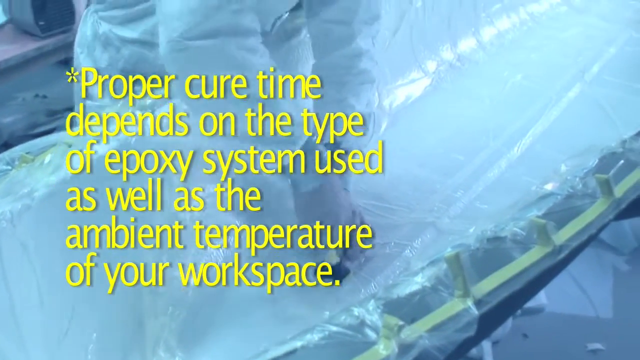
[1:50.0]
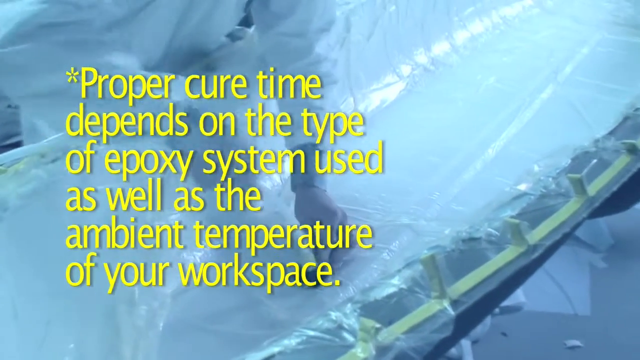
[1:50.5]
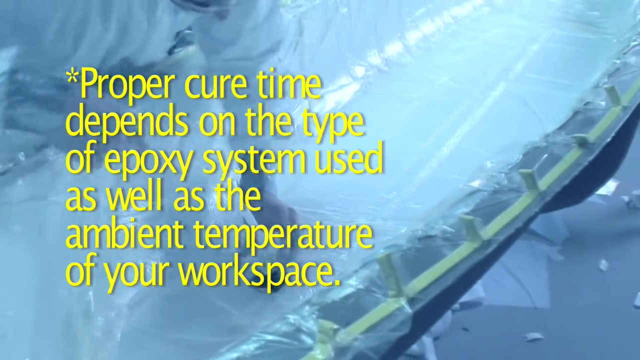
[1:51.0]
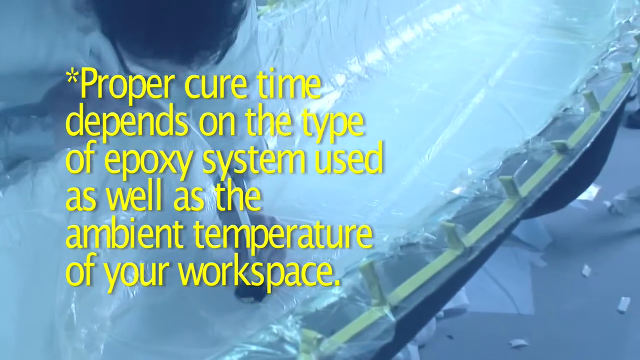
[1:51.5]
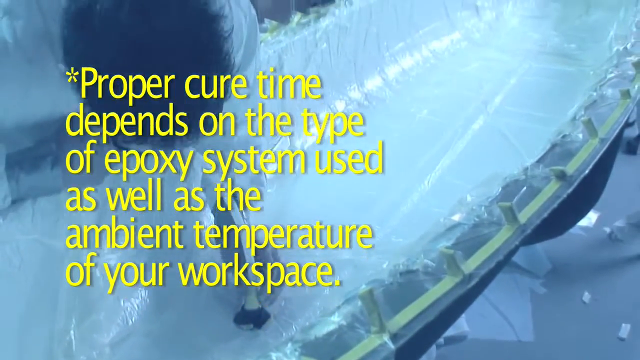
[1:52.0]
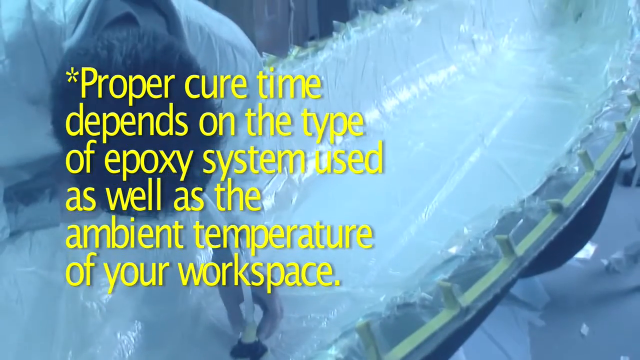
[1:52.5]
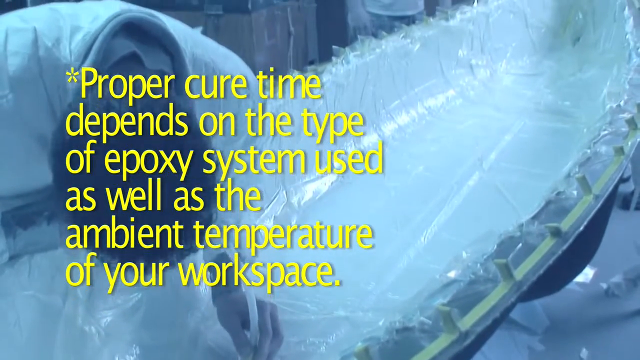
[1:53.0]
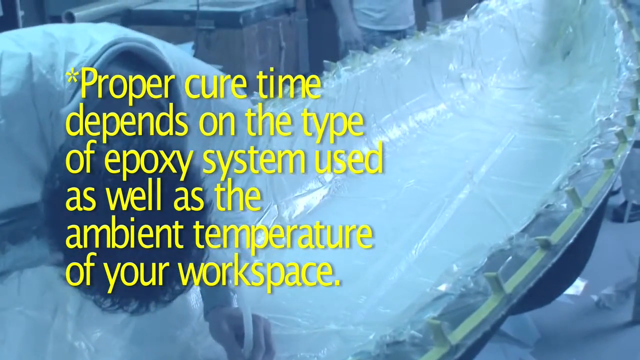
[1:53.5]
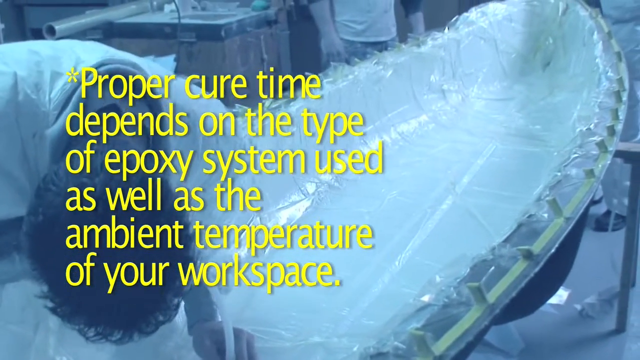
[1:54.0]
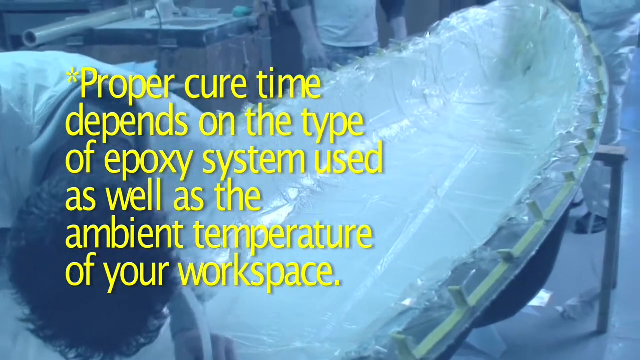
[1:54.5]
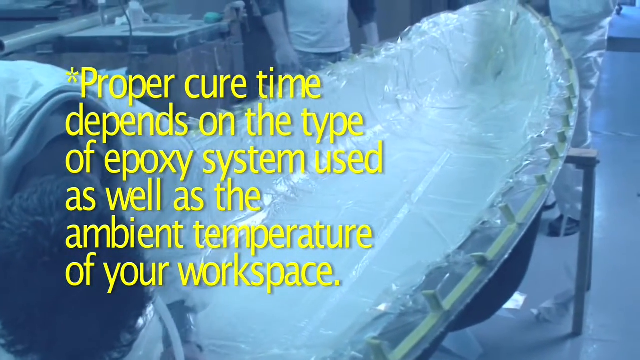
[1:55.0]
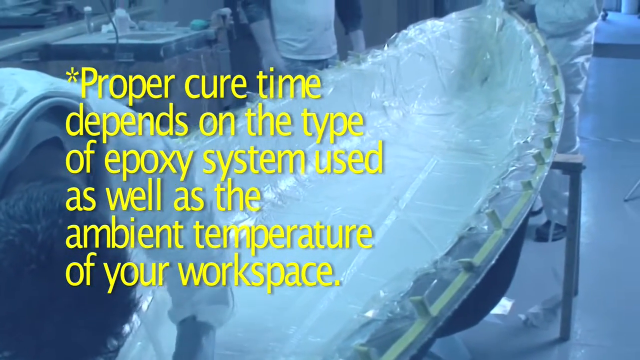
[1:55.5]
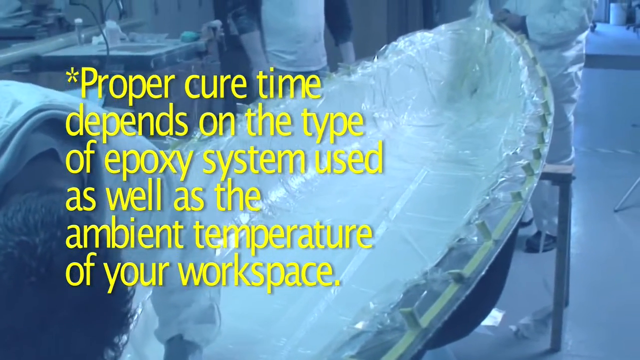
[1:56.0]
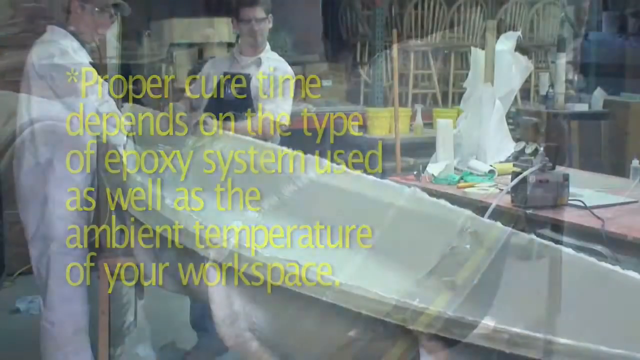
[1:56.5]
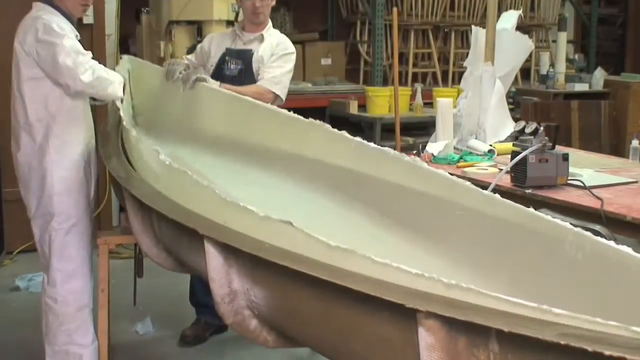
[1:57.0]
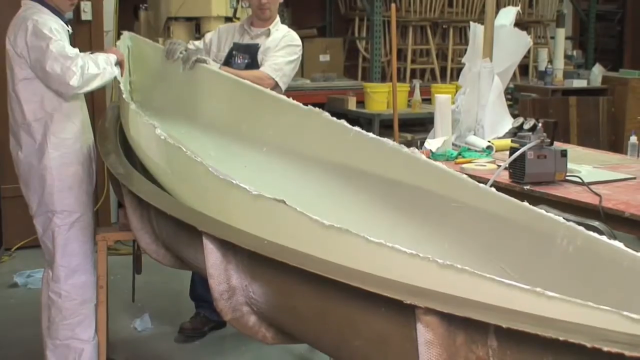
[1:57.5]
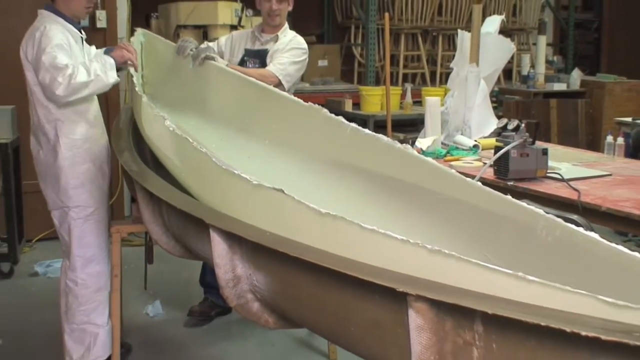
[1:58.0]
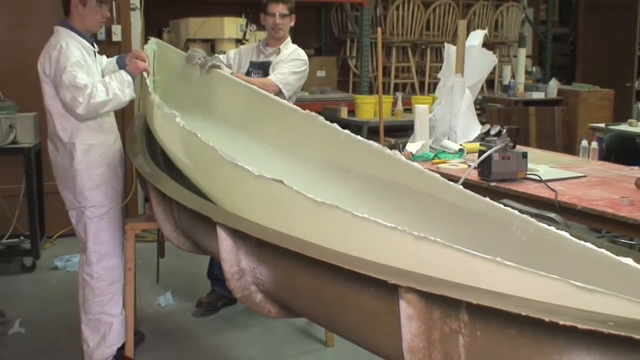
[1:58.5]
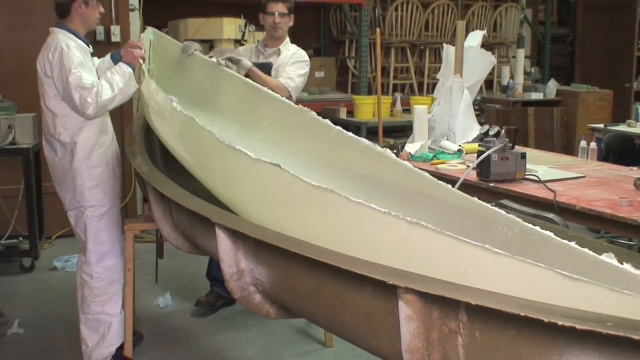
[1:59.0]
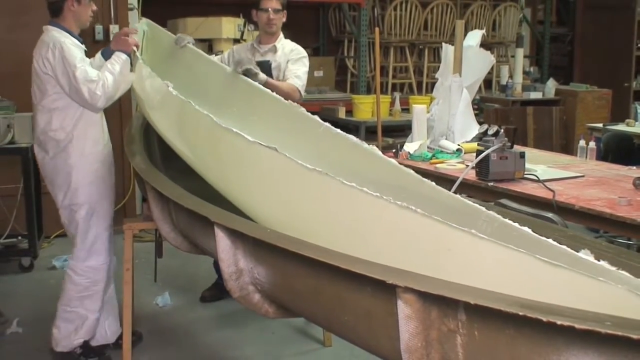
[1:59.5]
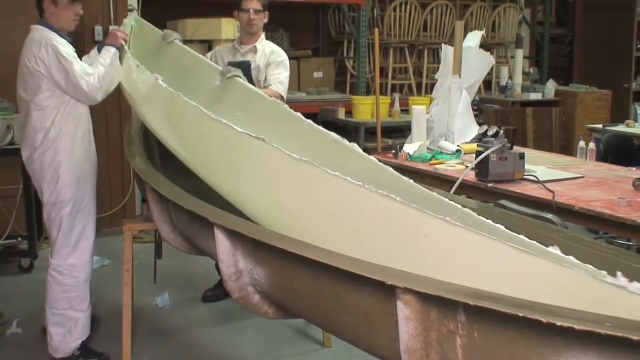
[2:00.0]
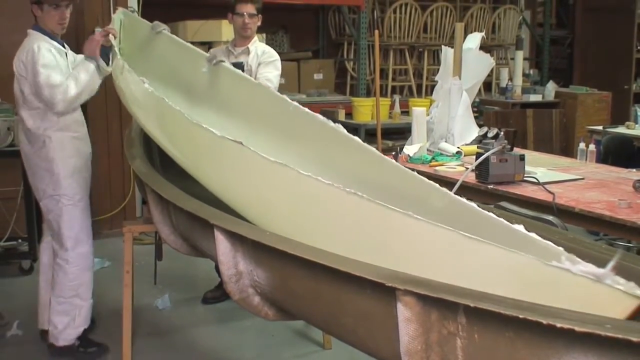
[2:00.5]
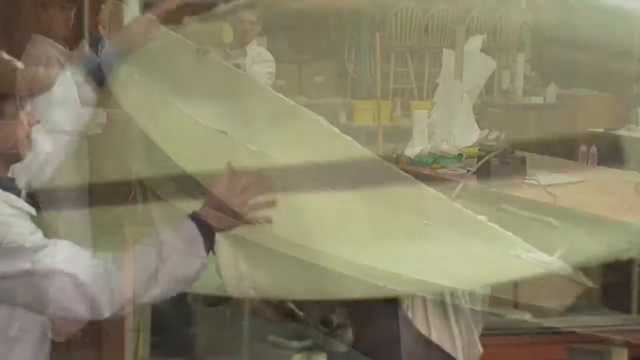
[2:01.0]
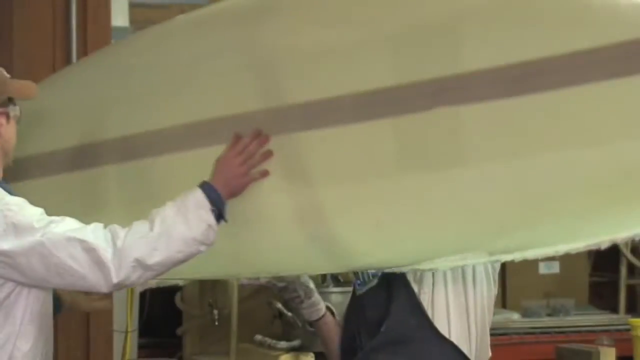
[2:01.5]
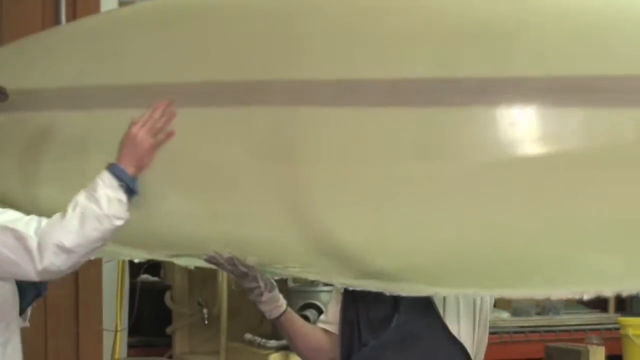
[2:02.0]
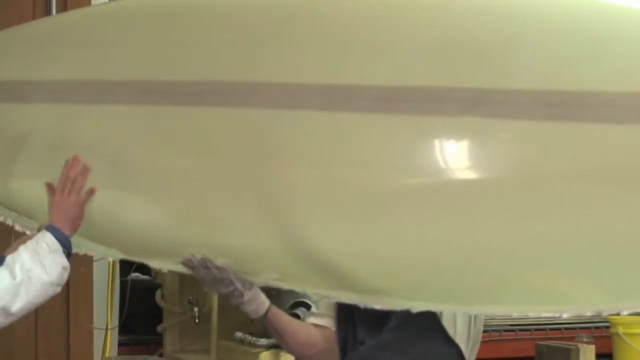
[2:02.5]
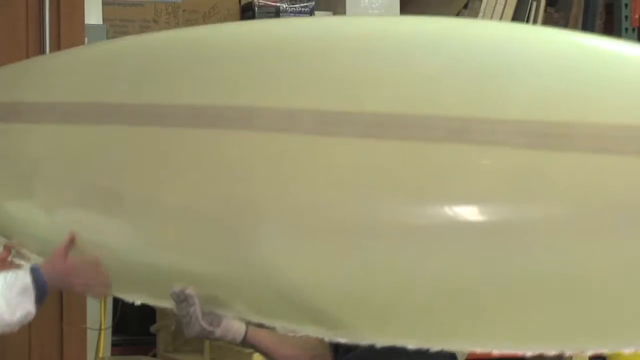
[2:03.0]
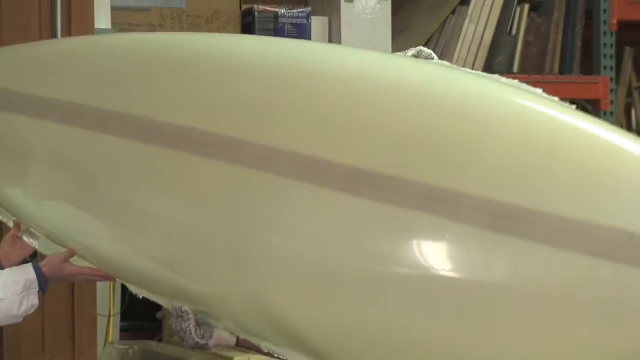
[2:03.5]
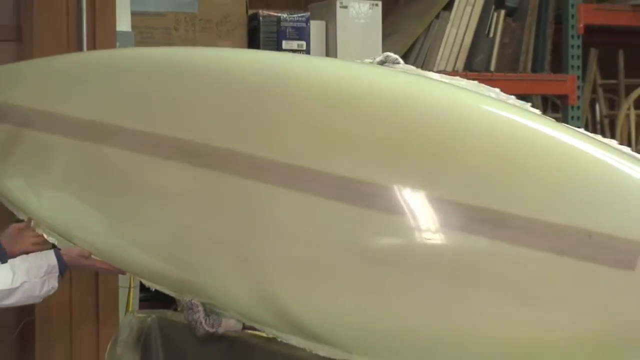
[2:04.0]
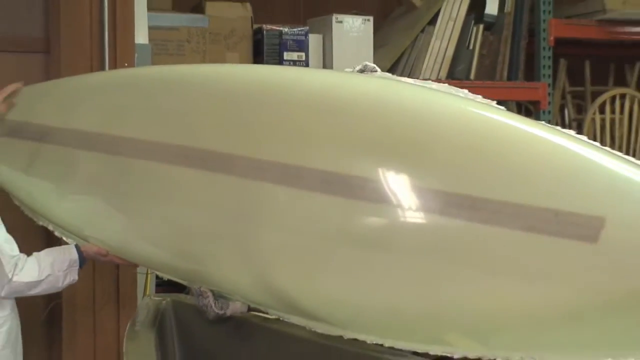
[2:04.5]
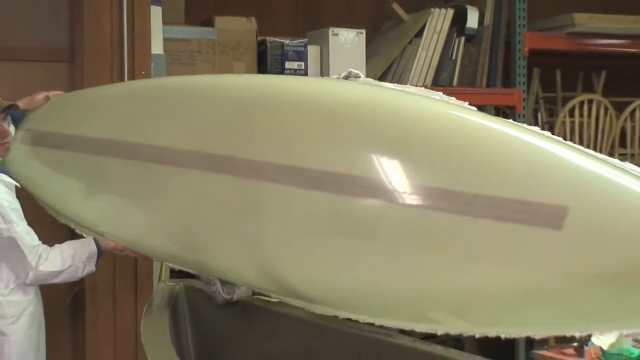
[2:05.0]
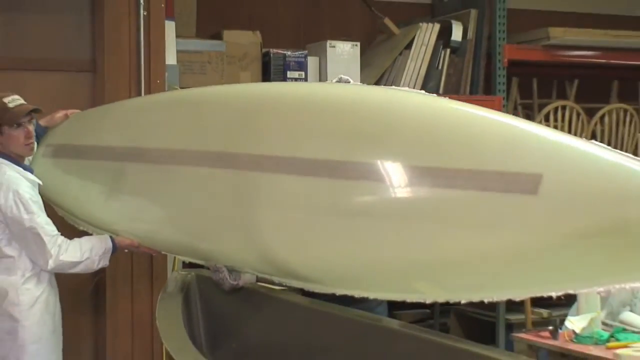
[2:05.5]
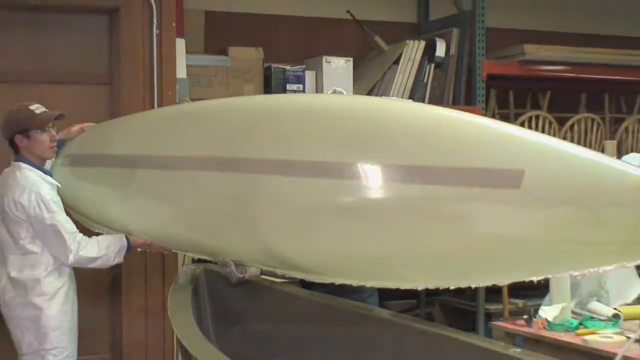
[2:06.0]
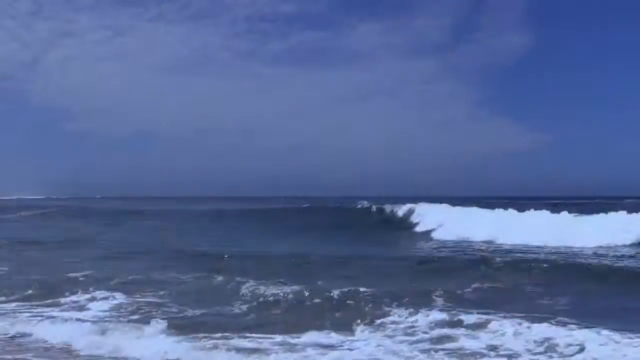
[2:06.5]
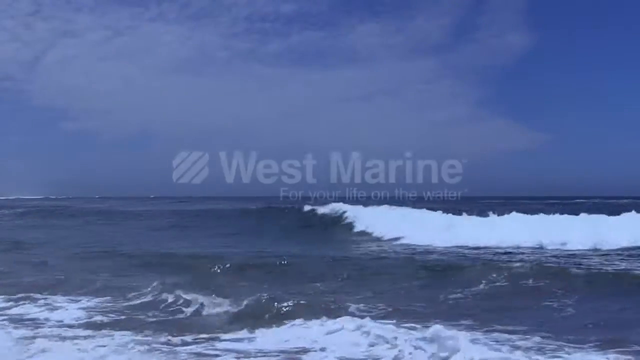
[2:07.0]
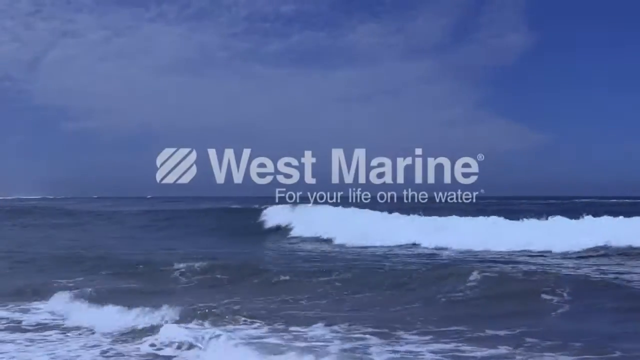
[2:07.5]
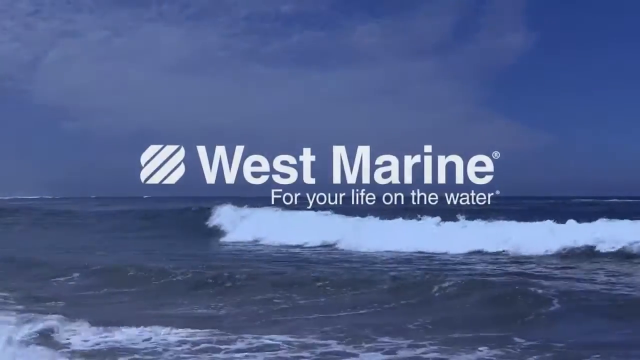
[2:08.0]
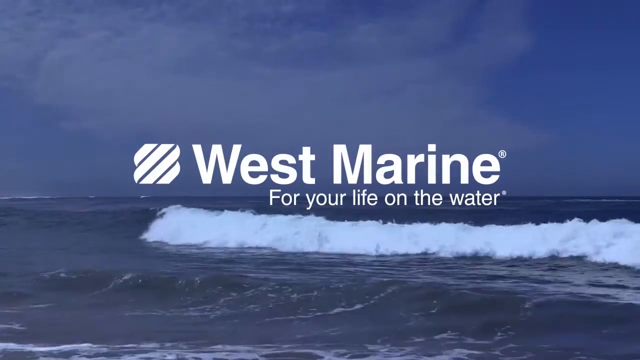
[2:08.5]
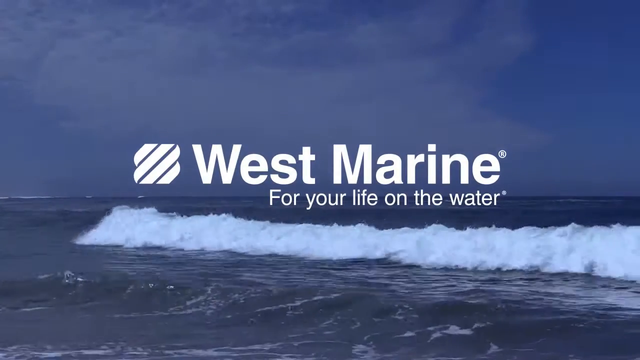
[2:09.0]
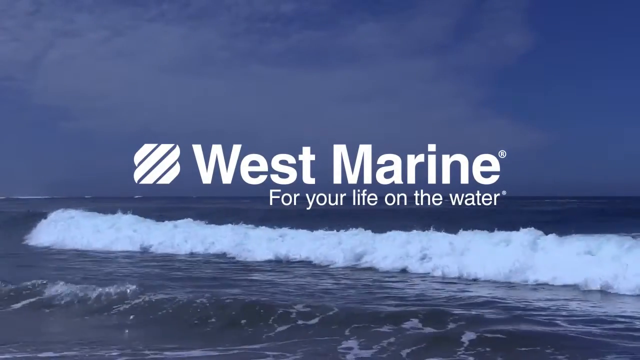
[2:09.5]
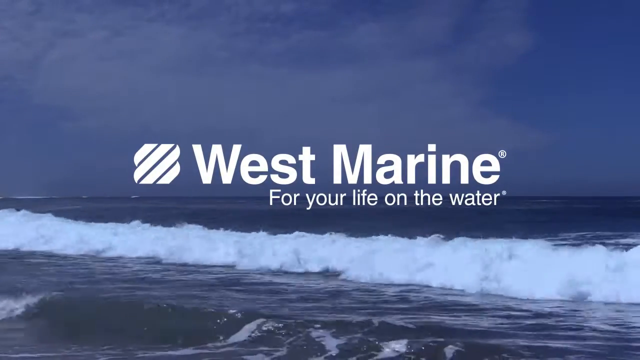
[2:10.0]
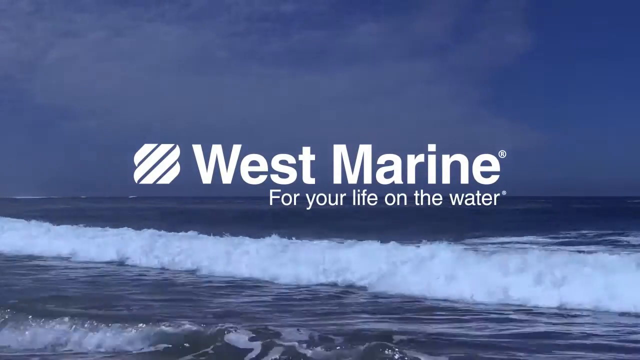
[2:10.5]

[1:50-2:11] The man continues configuring the canoe, which is wrapped with plastic and has yellow tape around its sides. On the left side are the yellow words "proper cure time depends on the type of epoxy system used as well as the ambient temperature of your workspace". The camera pans out around the canoe, and then shows a look at the interior of the canoe, which the two men are taking apart. The video ends with the same footage shown at the beginning: a view of an oceanfront with waves, and in the middle the white words "West Marine for your life on the water". Next to them is a square-shaped logo with diagonal lines inside the square, also in white.